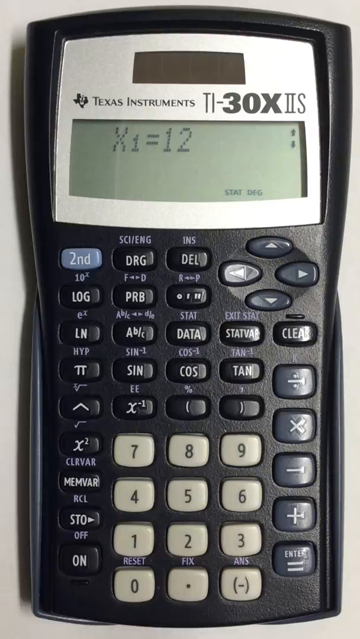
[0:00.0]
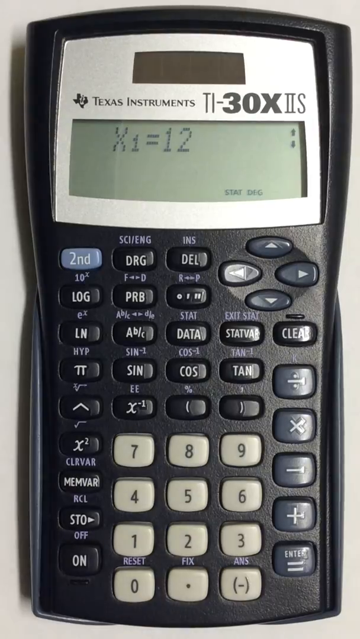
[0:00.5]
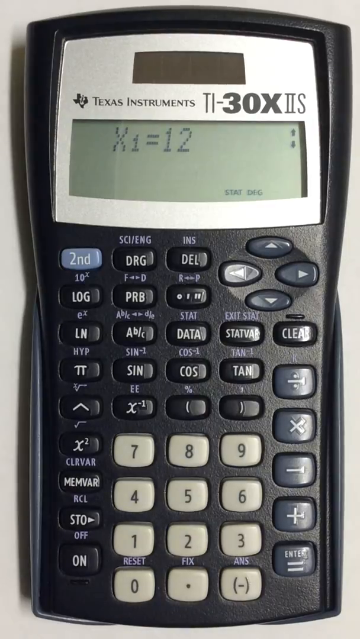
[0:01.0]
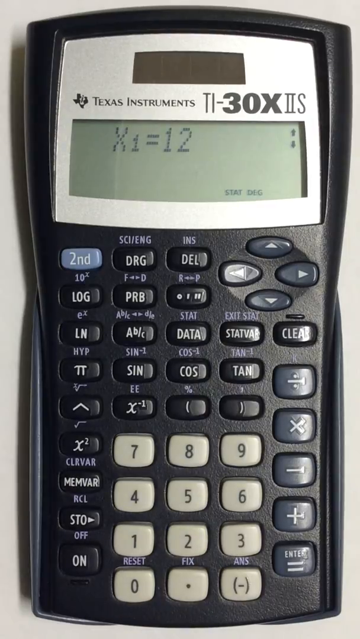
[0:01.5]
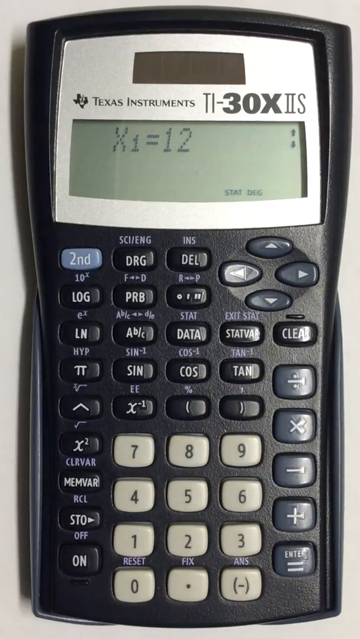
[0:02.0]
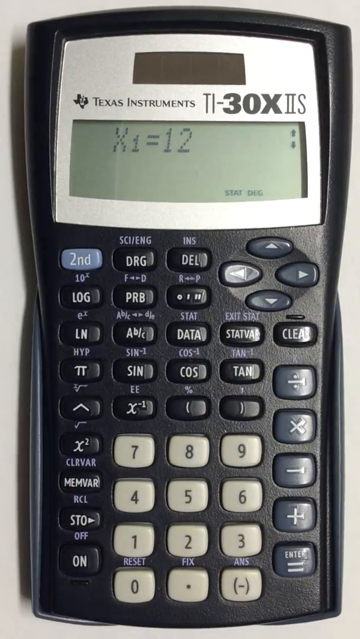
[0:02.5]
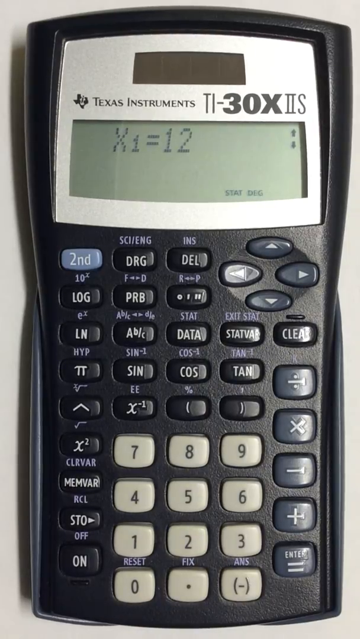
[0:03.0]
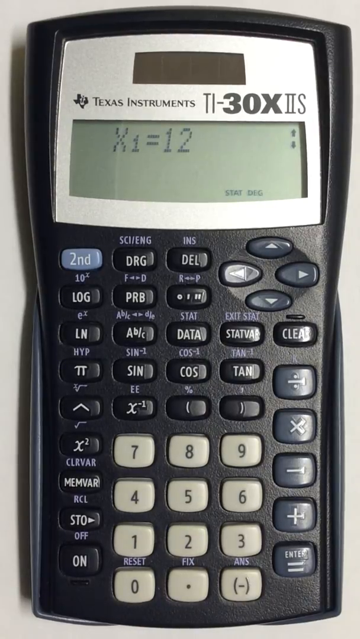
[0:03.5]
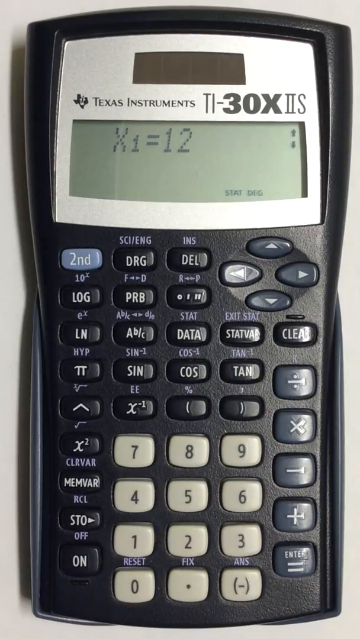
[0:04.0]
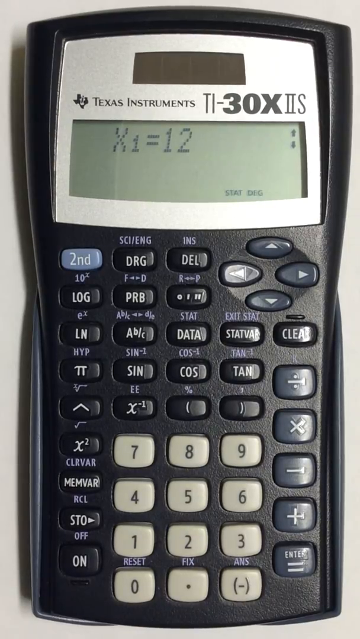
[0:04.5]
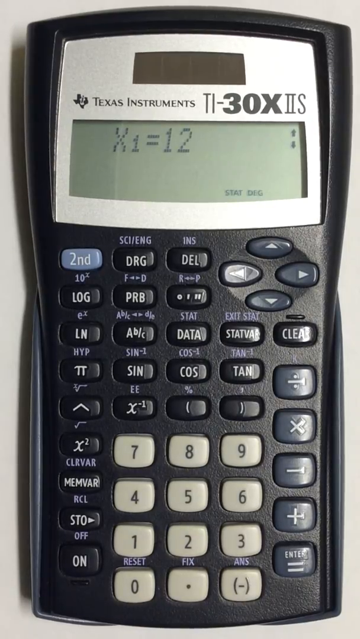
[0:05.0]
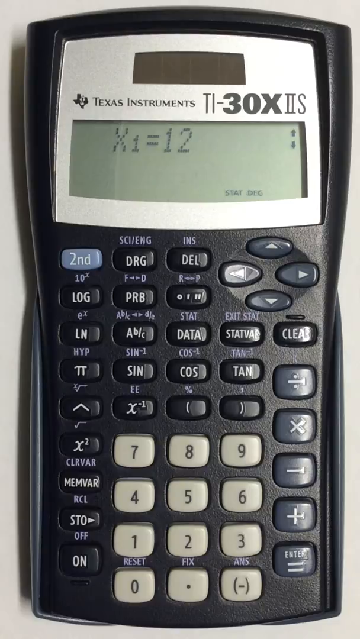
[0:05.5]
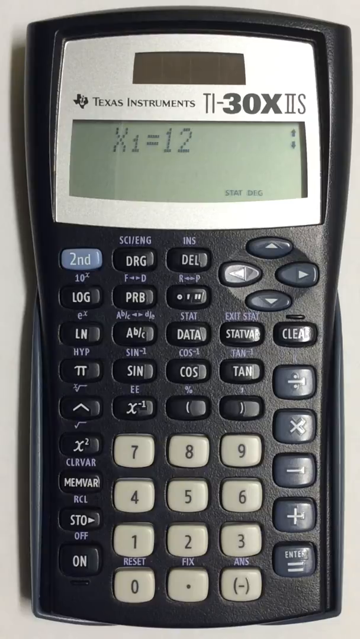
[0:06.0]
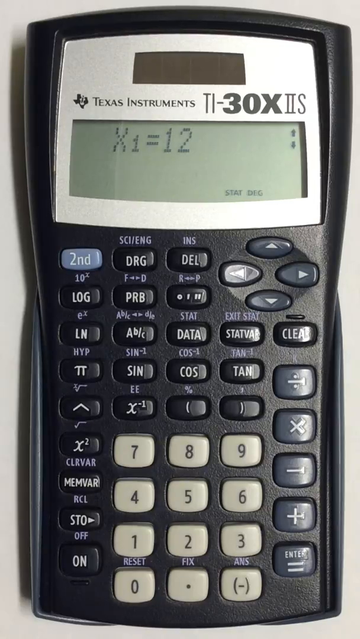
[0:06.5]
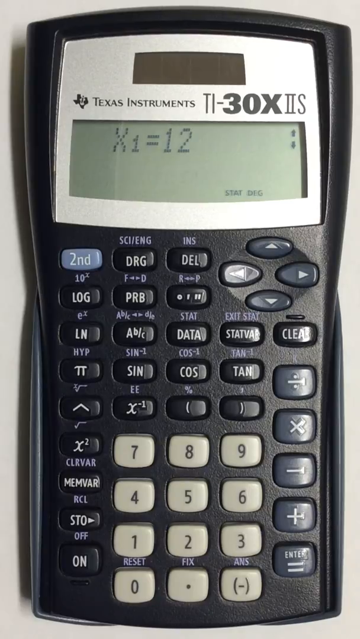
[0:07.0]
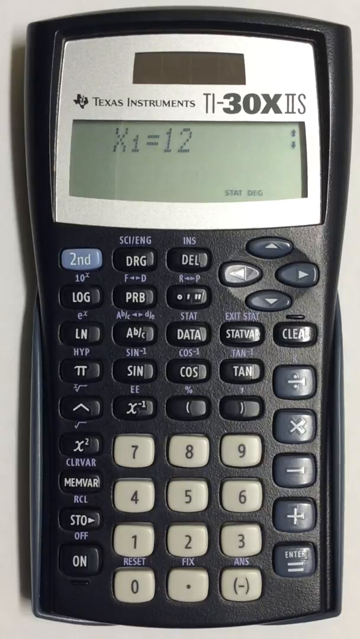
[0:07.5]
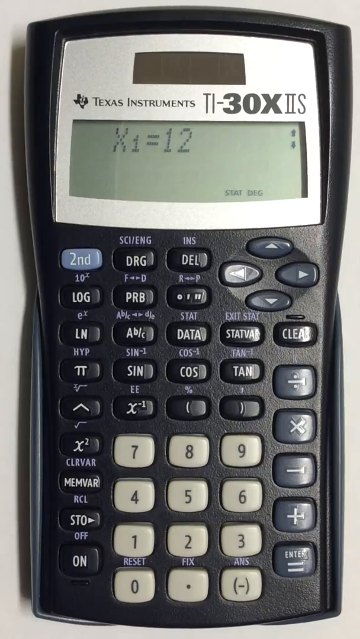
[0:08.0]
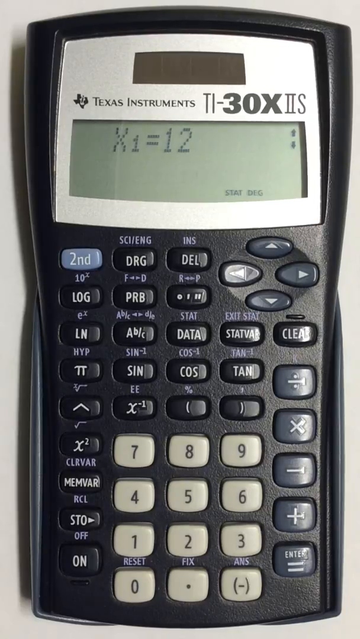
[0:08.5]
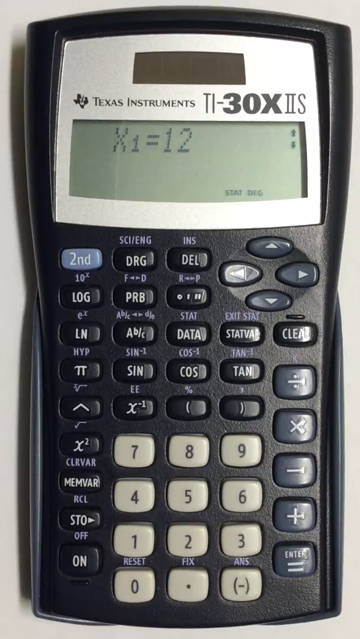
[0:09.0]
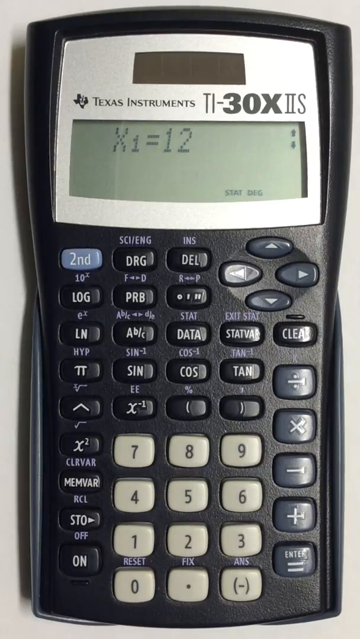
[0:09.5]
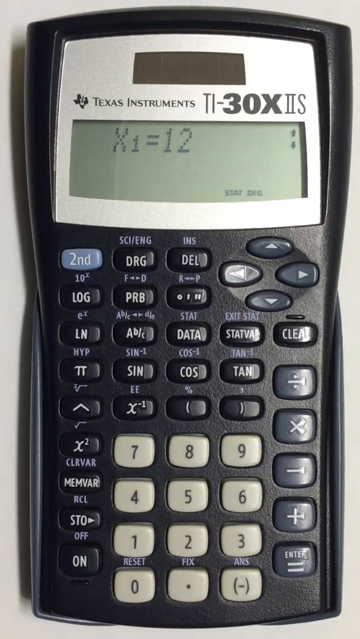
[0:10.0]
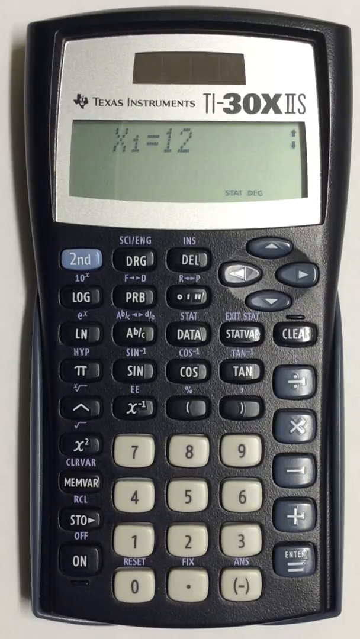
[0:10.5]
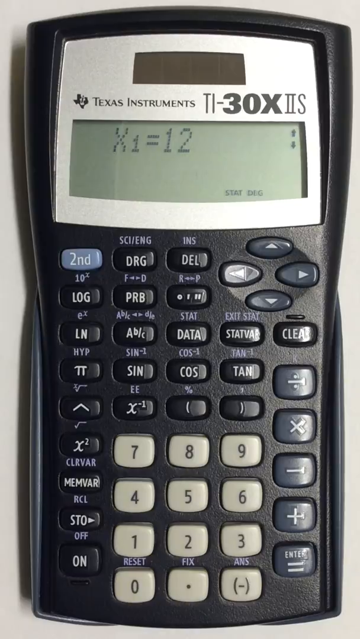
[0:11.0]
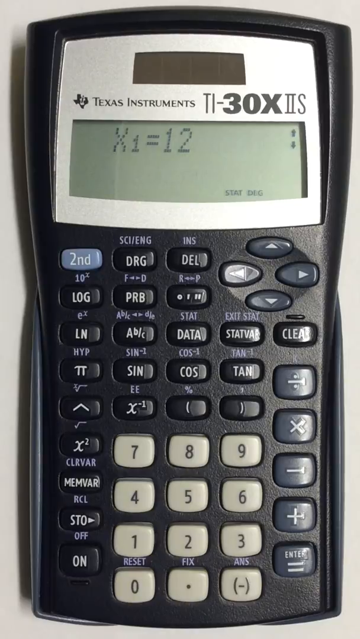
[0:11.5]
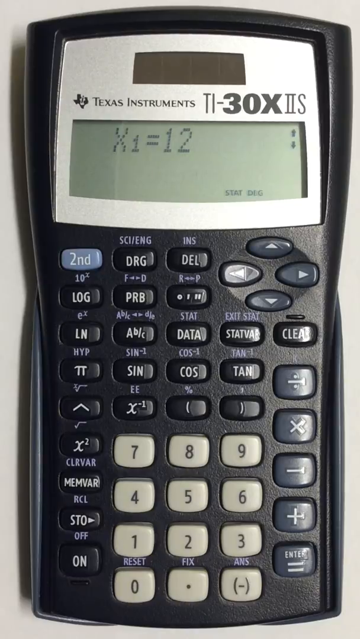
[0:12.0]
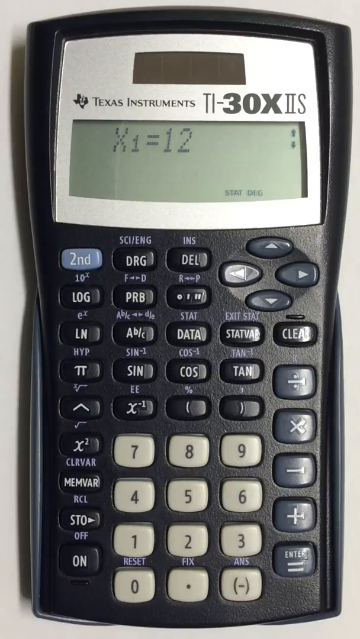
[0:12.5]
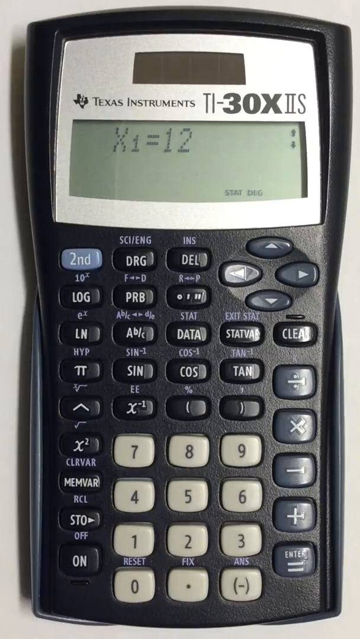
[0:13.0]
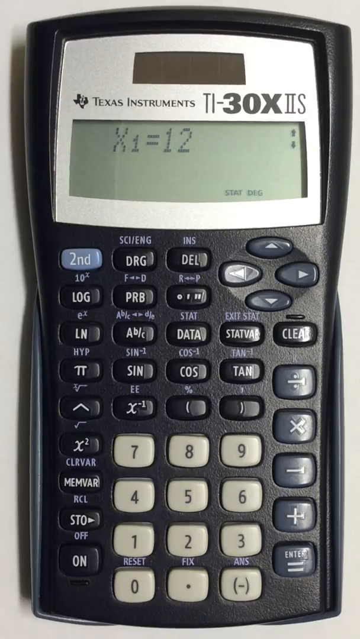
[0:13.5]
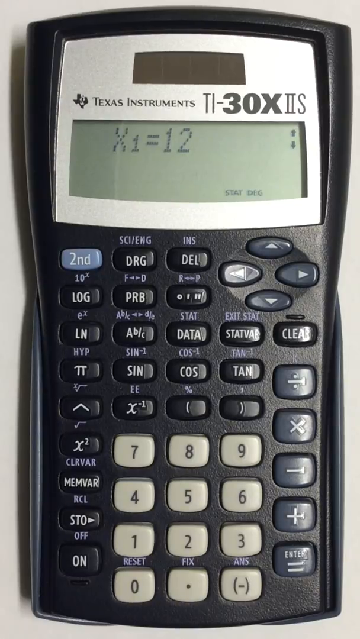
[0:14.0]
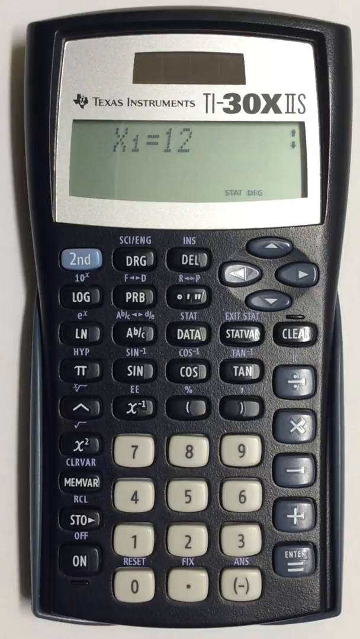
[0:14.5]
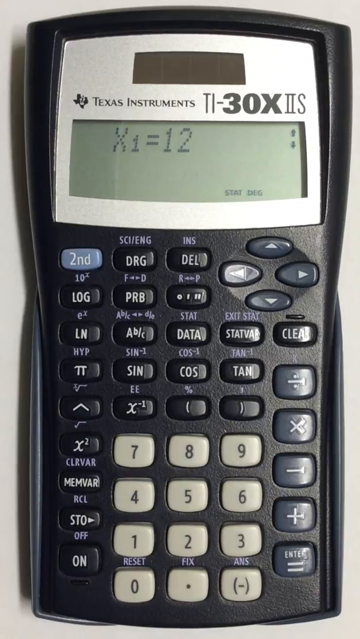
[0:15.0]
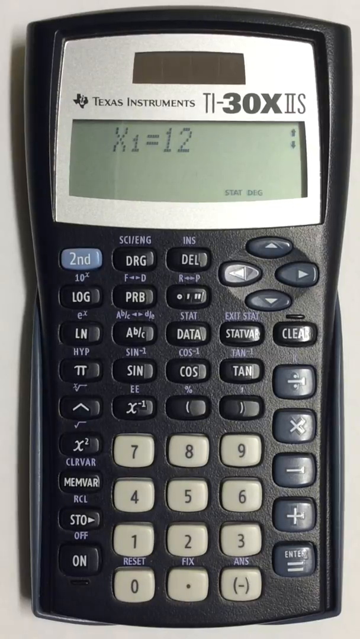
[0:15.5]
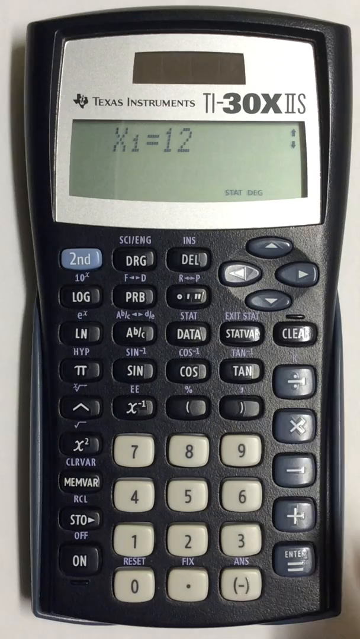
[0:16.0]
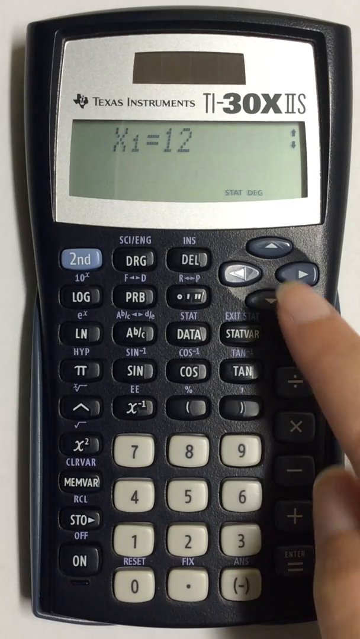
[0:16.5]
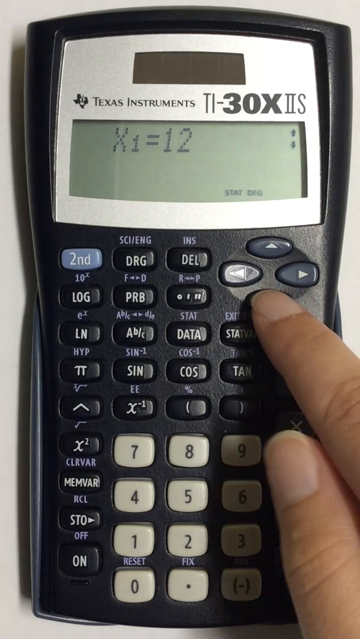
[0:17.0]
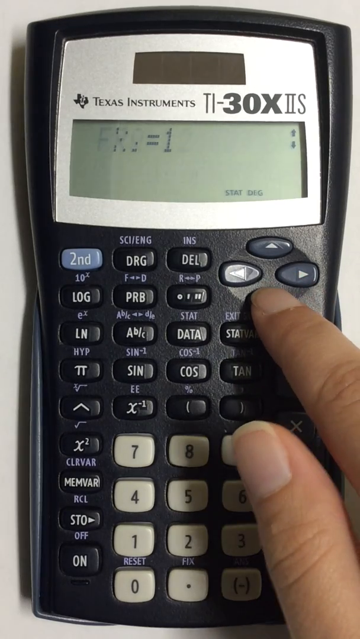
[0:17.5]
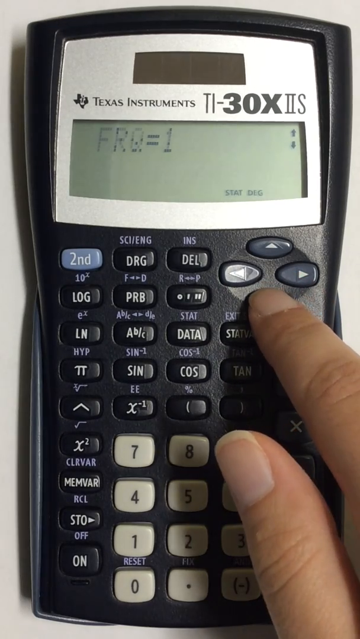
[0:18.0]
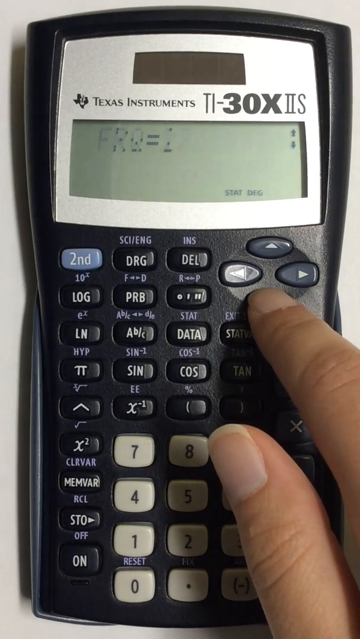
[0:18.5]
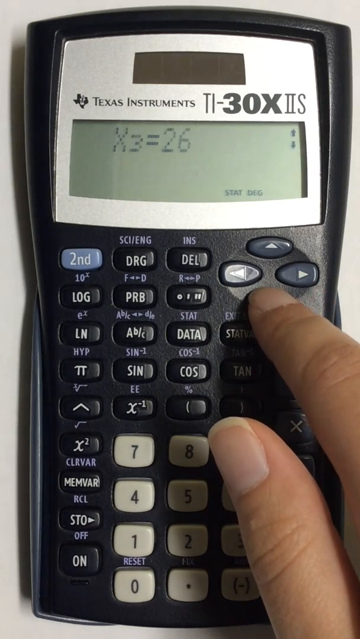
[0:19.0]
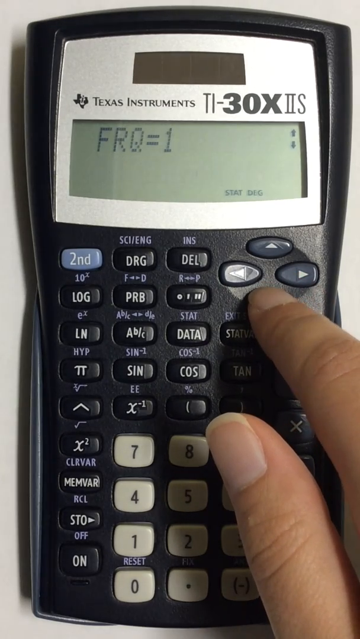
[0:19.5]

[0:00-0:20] A Texas Instruments 30X2 calculator in black is shown, with a variety of buttons. Most of the buttons are dark blue or black, and there are also some gray buttons. The display screen reads "x1 = 12". Other buttons include second, log, drg, prb, division, multiplication, subtract, plus and equal, along with the numbers 0 through 9. There is also a button that says "reset", an up arrow button, a log button and a delete button. A hand comes onto the screen and pushes the down arrow button, and text appears on the display: "frequency = 1", "x2 = 27", "frequency = 1", "x3 = 26", "frequency = 1".